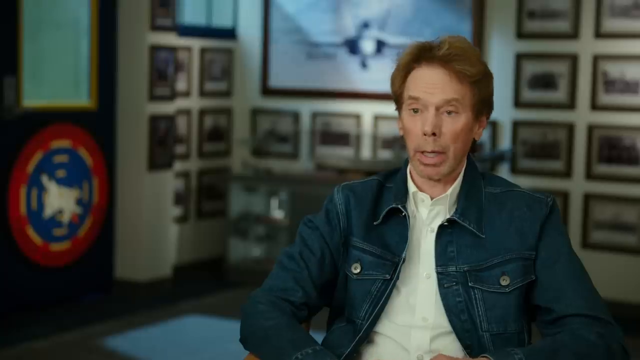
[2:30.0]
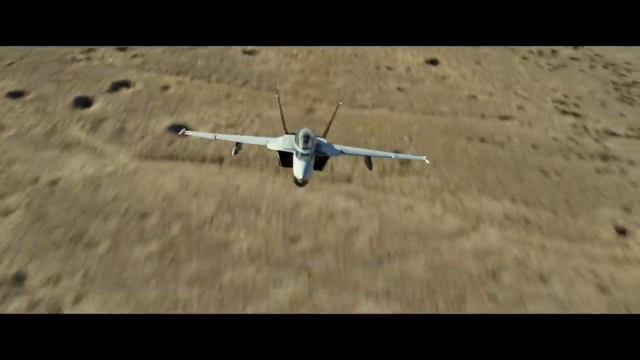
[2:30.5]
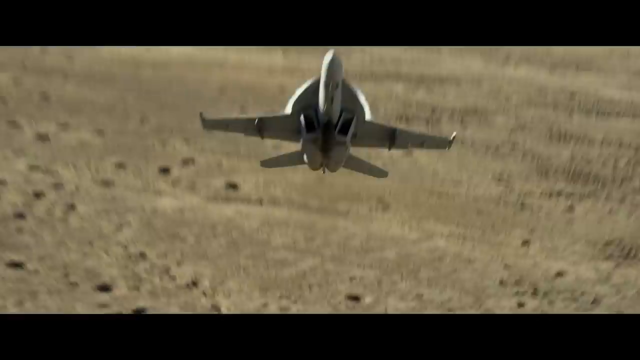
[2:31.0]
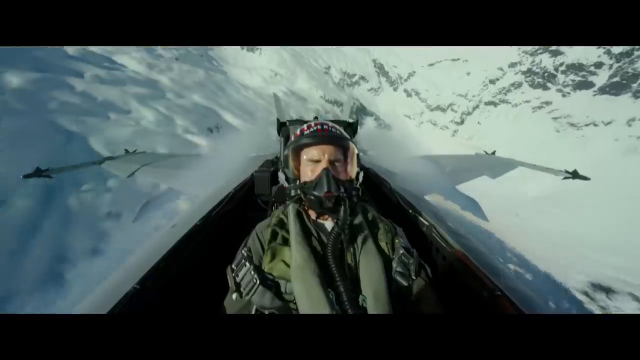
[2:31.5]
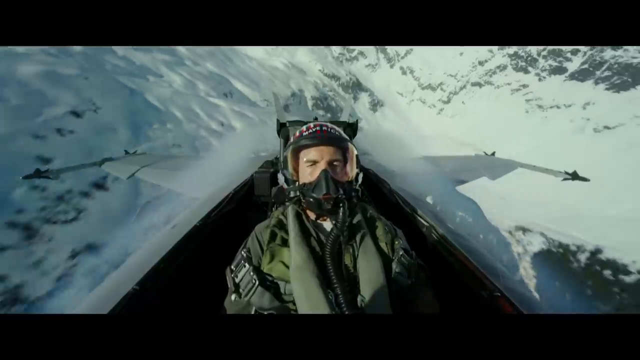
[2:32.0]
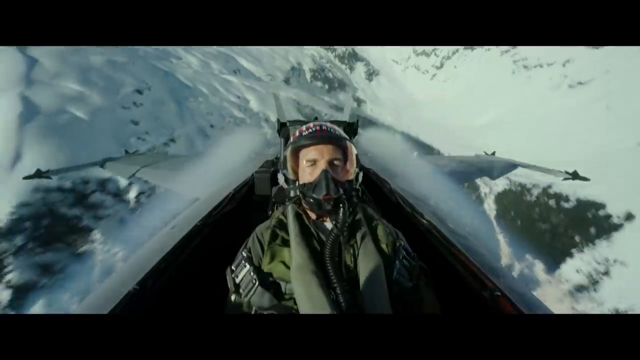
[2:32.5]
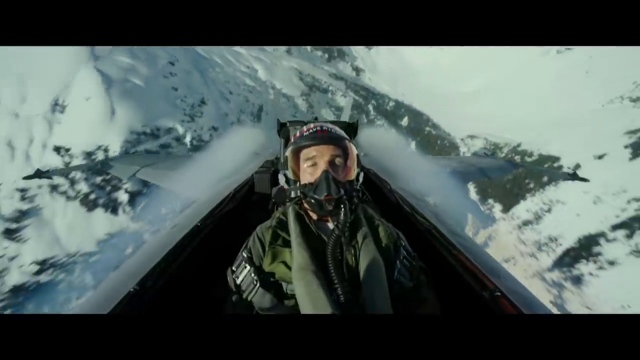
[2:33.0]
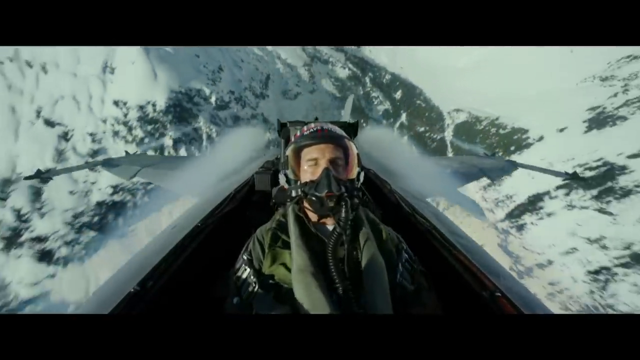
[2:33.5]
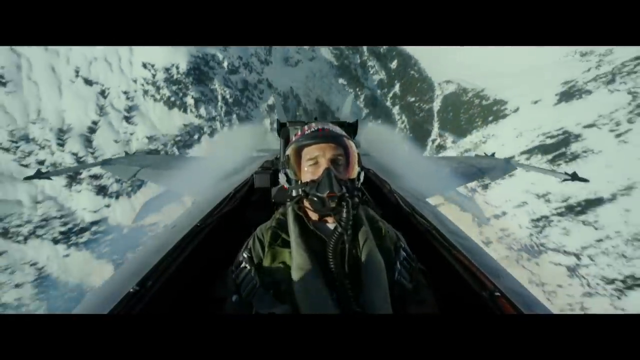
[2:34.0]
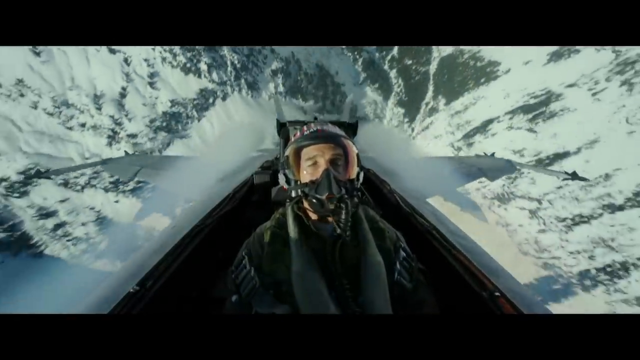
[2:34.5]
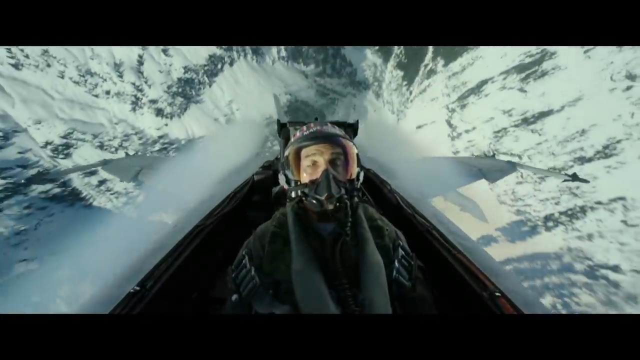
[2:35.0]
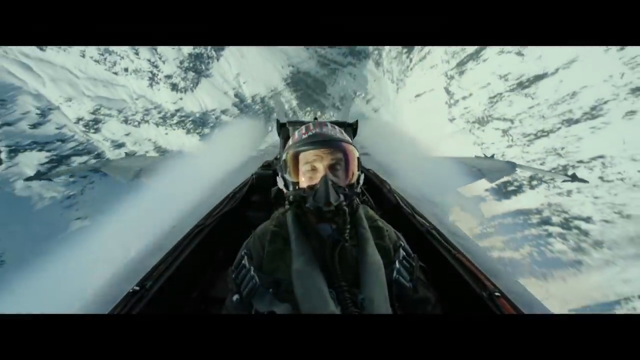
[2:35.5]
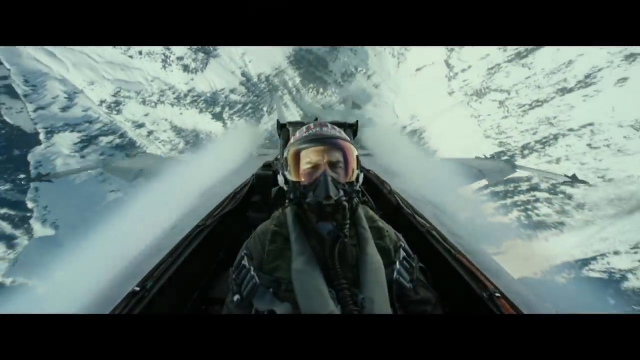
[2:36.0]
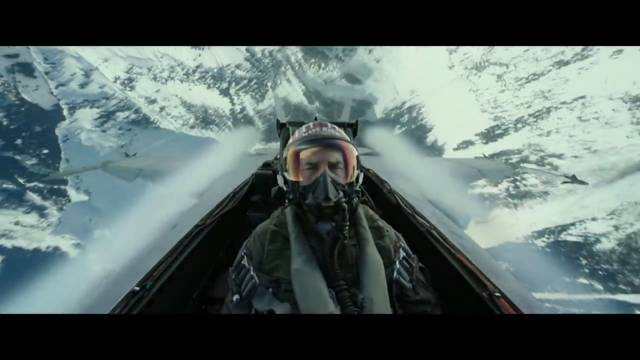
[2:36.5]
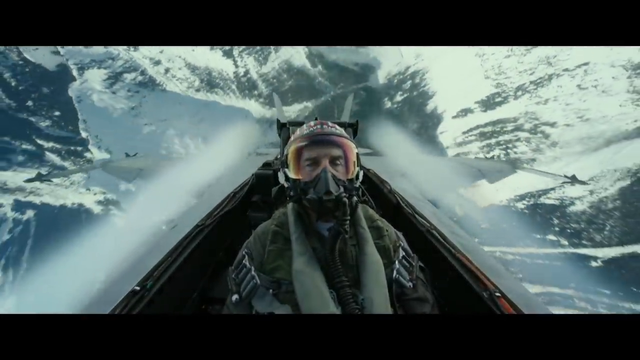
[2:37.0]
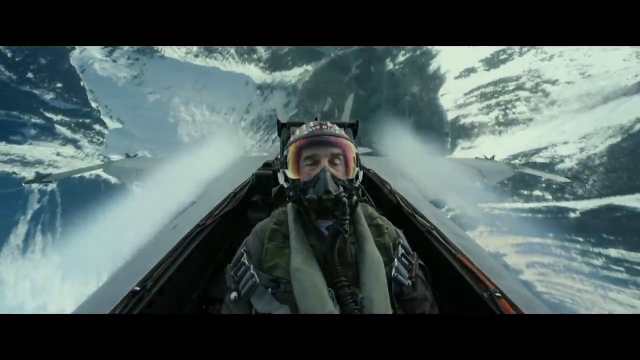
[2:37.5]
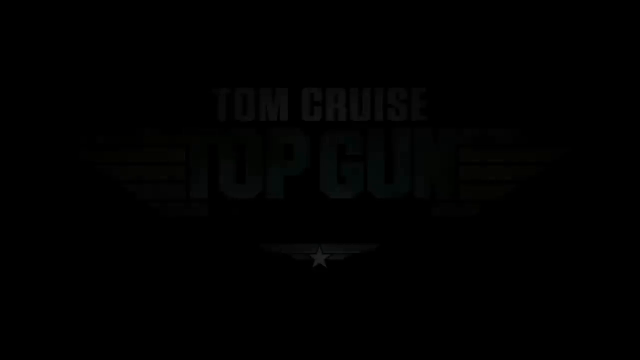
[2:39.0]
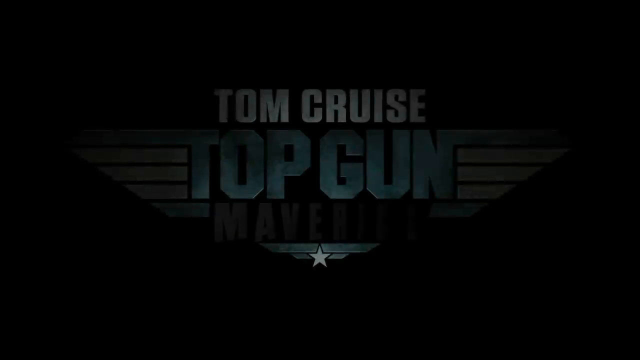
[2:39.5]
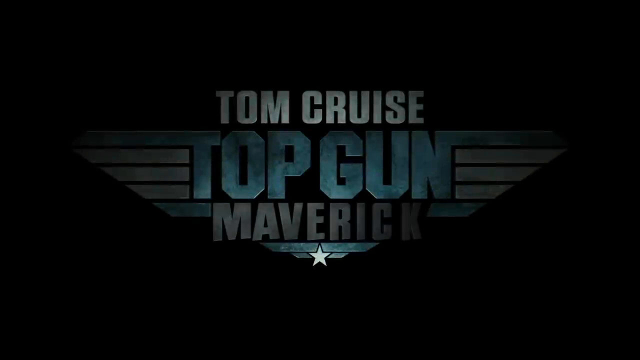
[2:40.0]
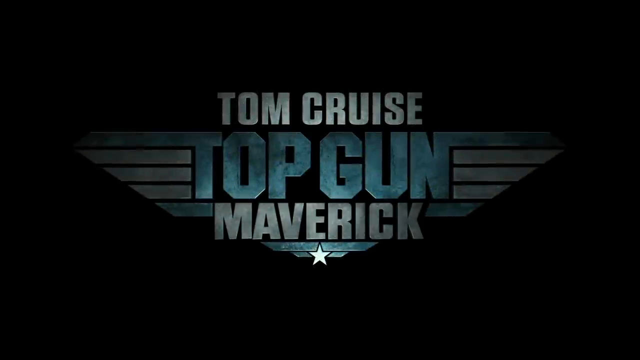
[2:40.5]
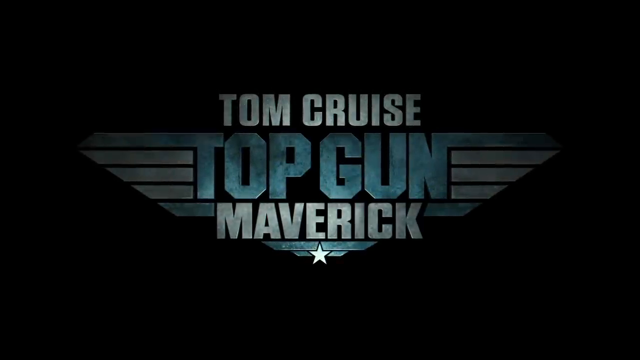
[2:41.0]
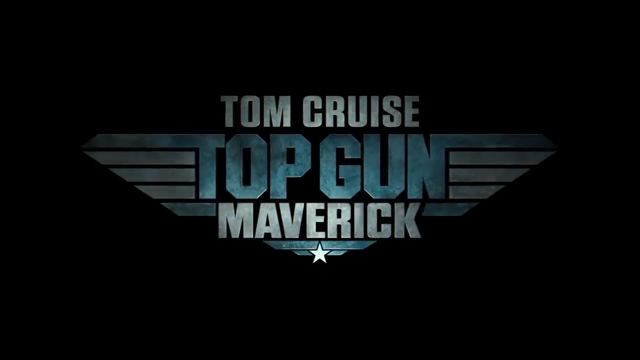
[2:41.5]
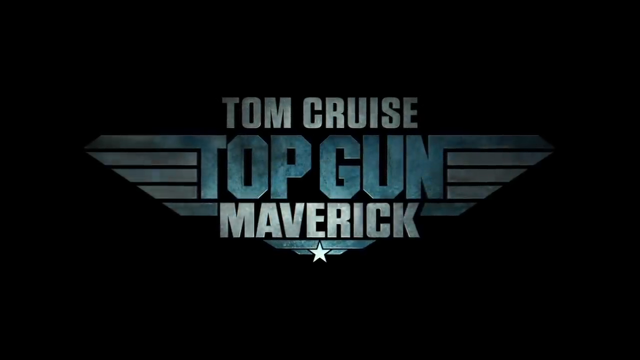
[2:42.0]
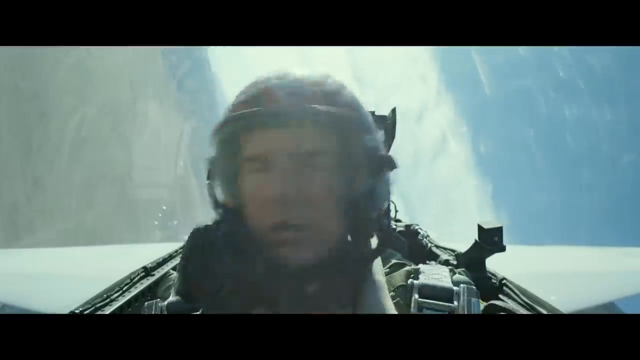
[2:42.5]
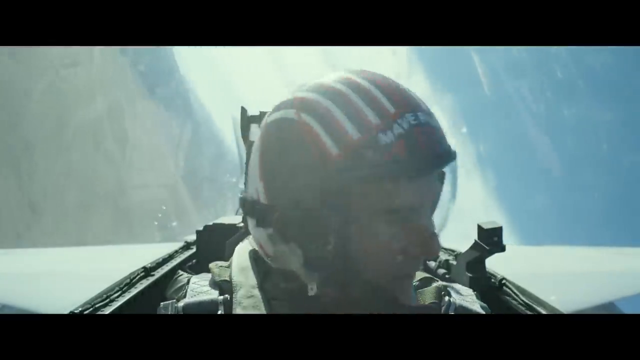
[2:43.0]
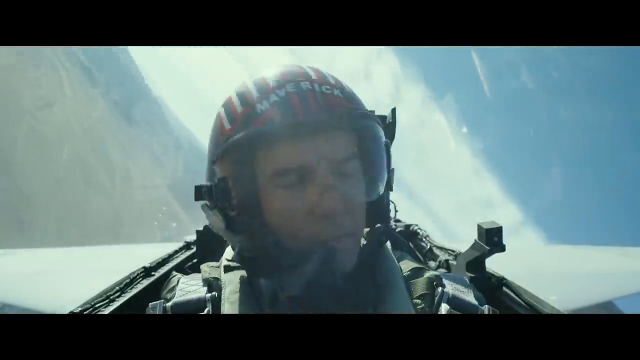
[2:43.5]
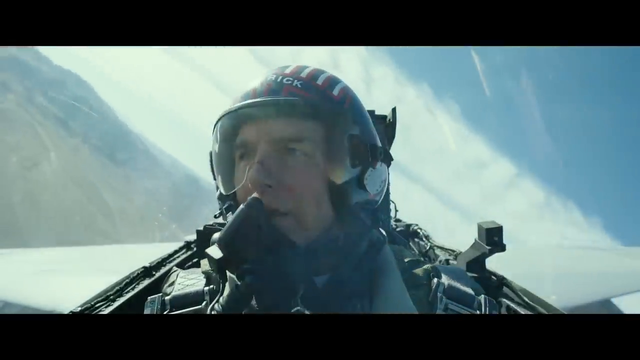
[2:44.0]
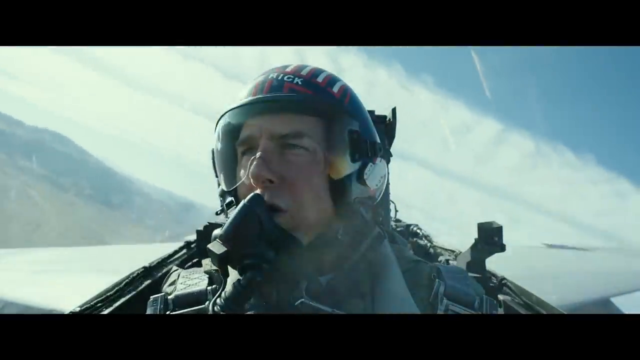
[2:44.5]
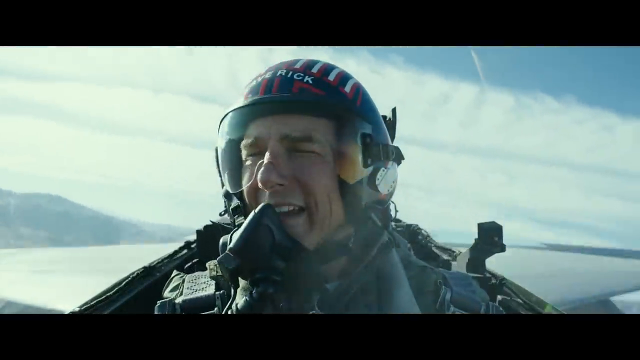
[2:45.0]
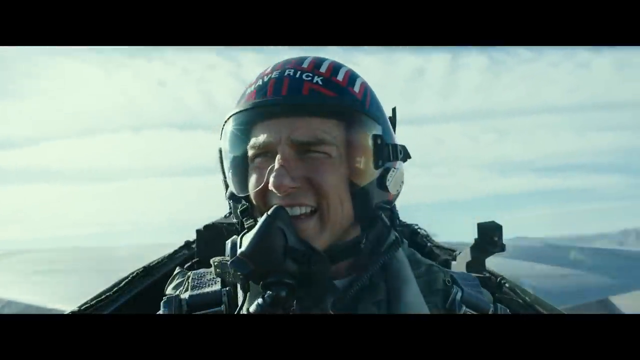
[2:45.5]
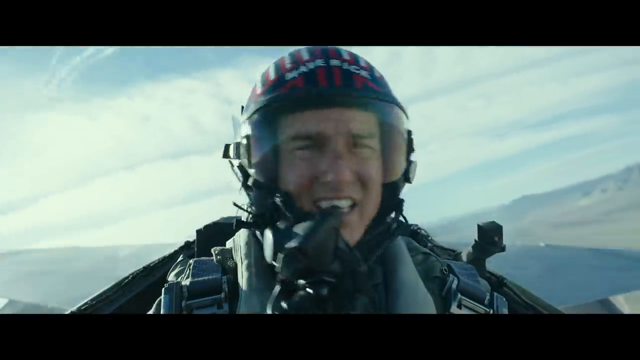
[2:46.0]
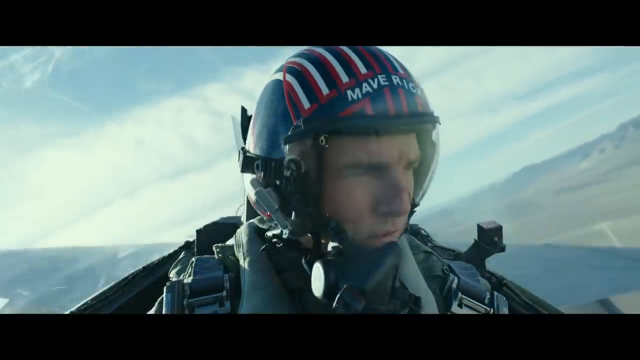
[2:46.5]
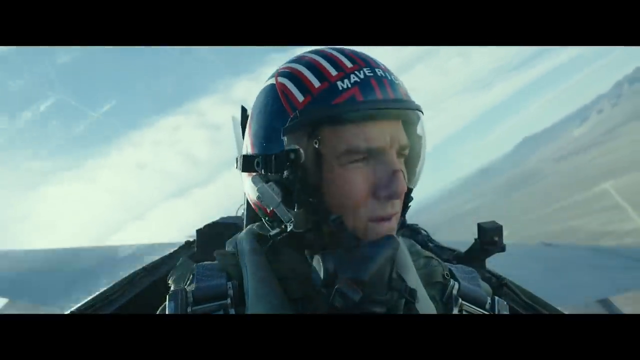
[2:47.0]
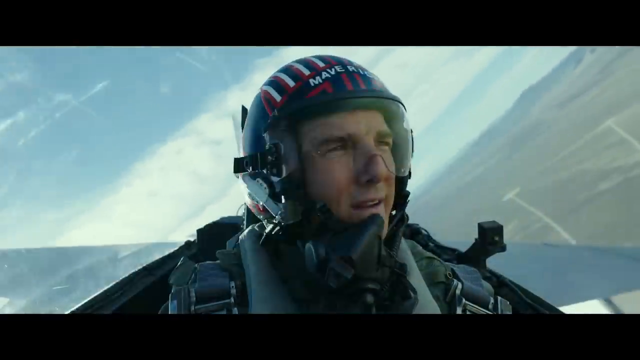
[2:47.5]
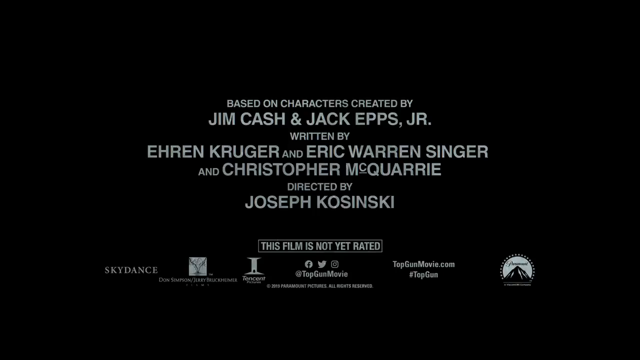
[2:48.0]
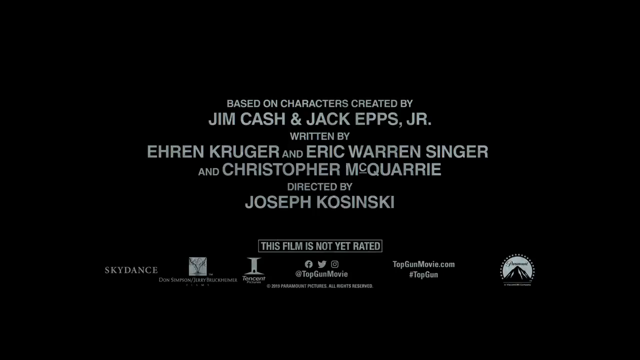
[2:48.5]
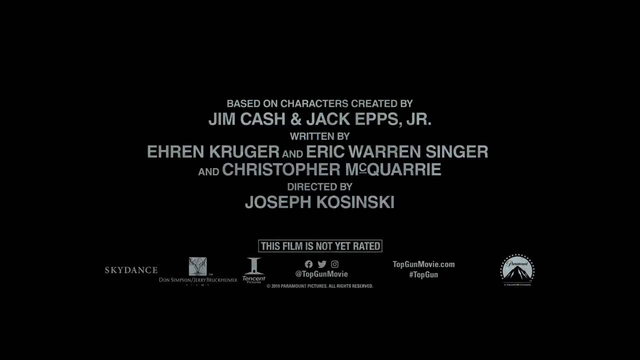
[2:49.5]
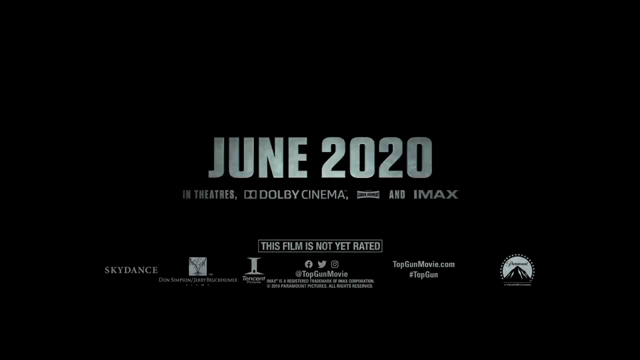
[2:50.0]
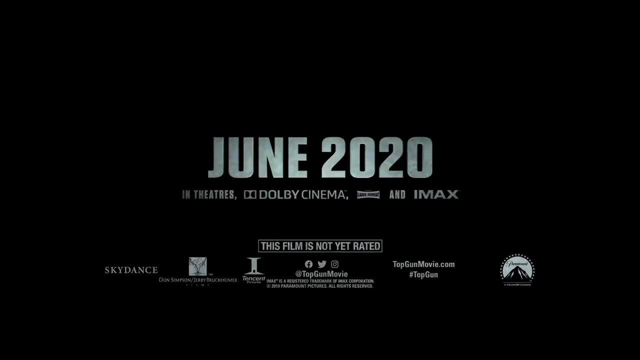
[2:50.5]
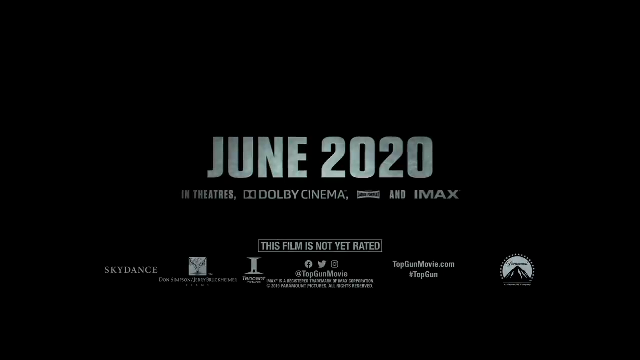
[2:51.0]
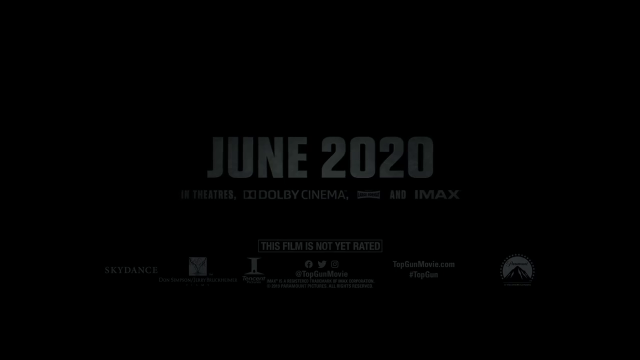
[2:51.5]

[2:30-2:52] People watch someone riding an aeroplane. Three people are up in the air, seemingly enjoying themselves, in what looks like a race in the air. Men wearing yellow clothes direct everyone which way to go. People come by, apparently explaining what is going on; they look to be in their mid-forties and wear green clothes. Visible text includes "top", "jam", "maverick", "June 2020", "payback", "phonies" and "jetpack". Judges look at the competitors, and some do not win.